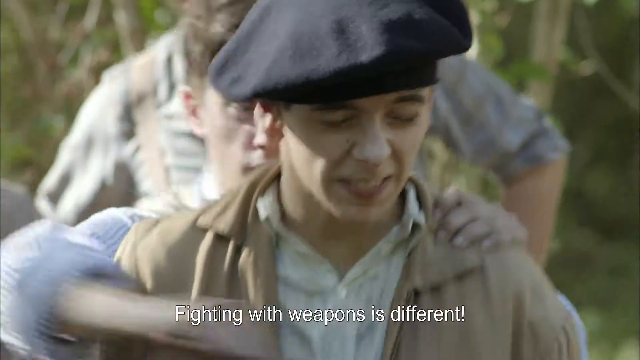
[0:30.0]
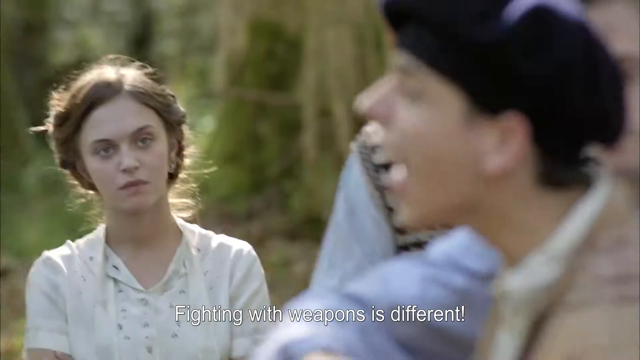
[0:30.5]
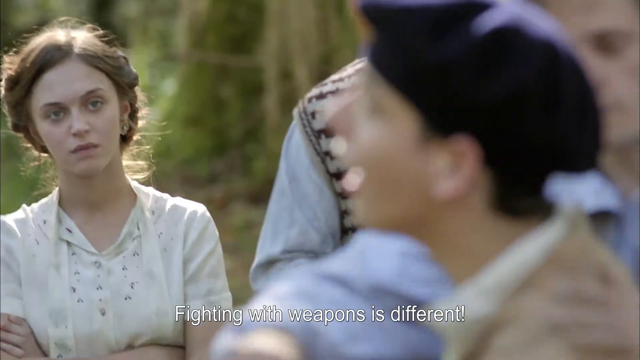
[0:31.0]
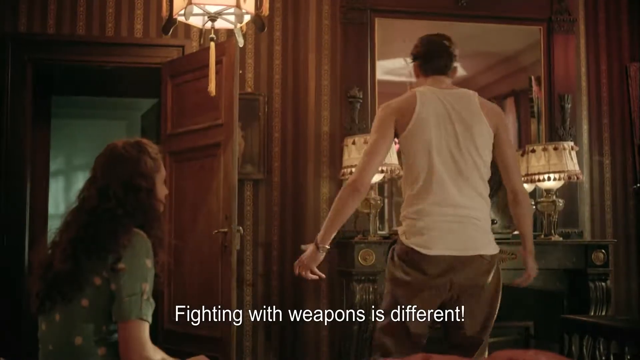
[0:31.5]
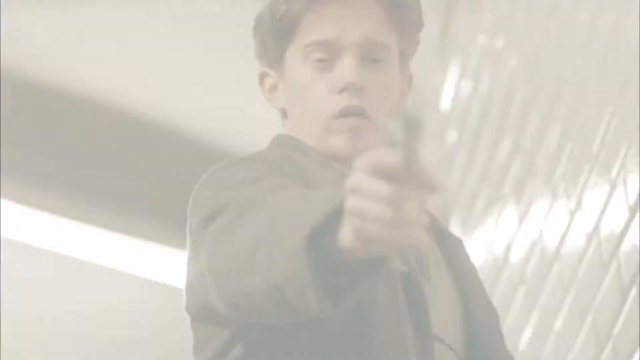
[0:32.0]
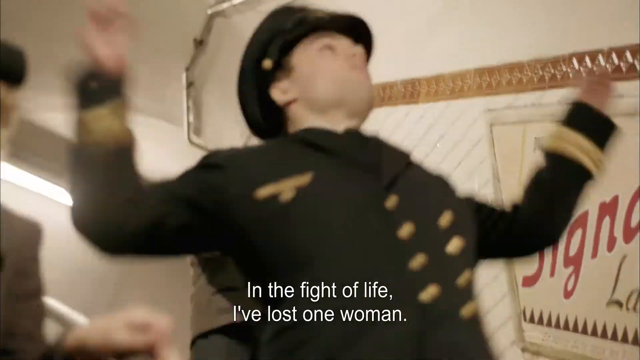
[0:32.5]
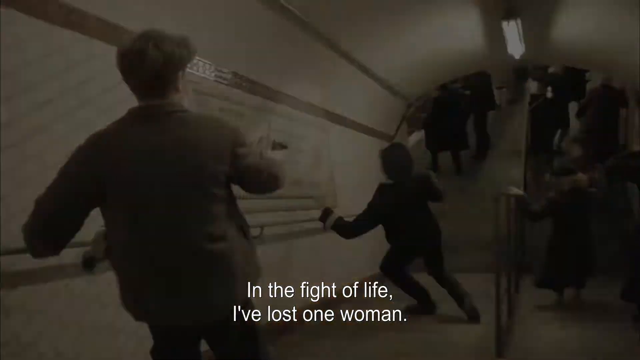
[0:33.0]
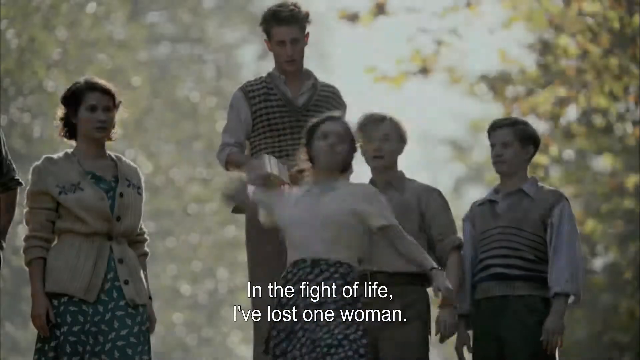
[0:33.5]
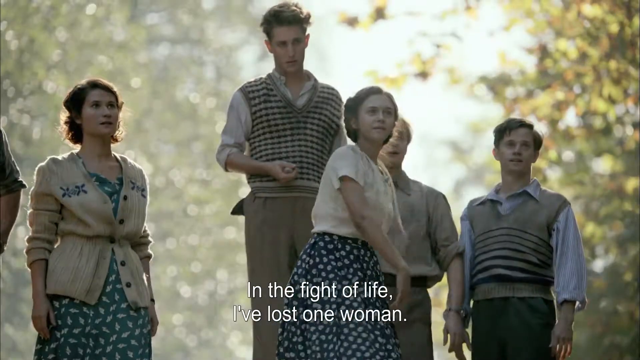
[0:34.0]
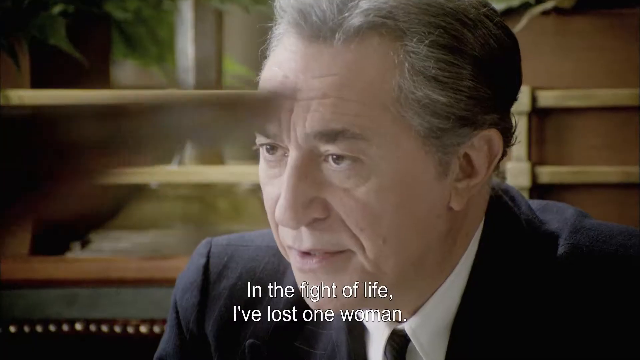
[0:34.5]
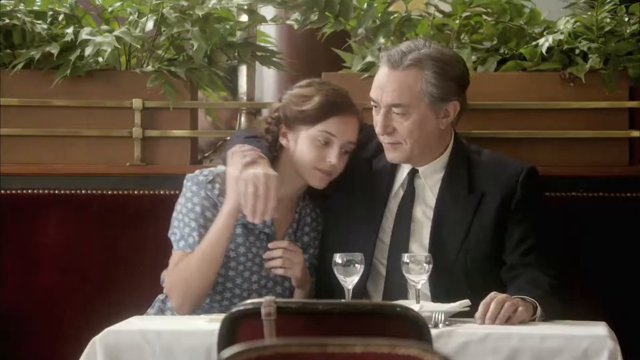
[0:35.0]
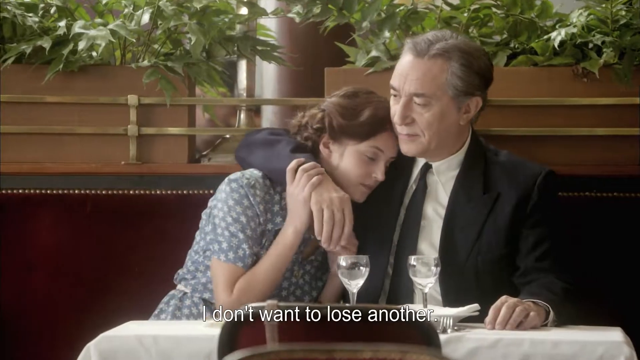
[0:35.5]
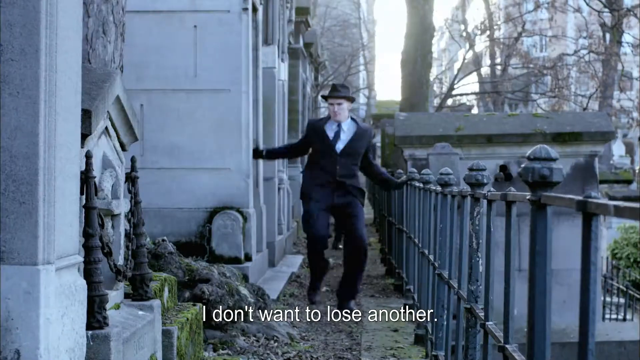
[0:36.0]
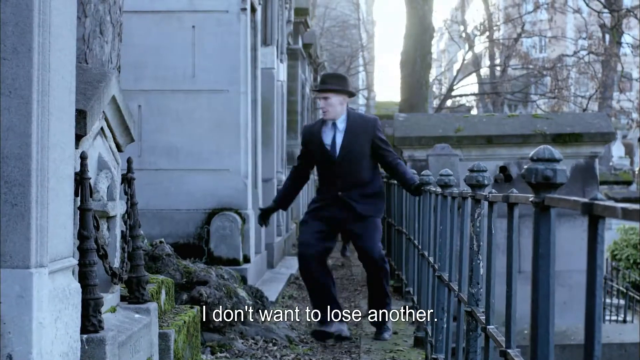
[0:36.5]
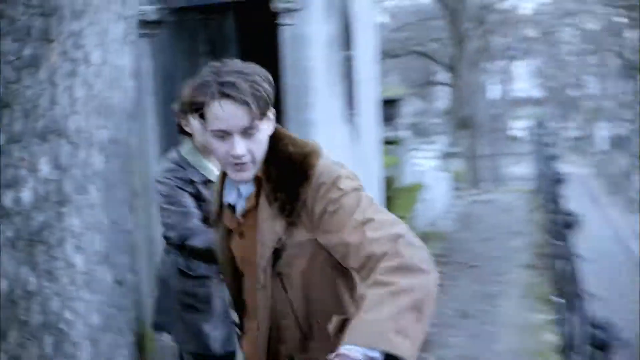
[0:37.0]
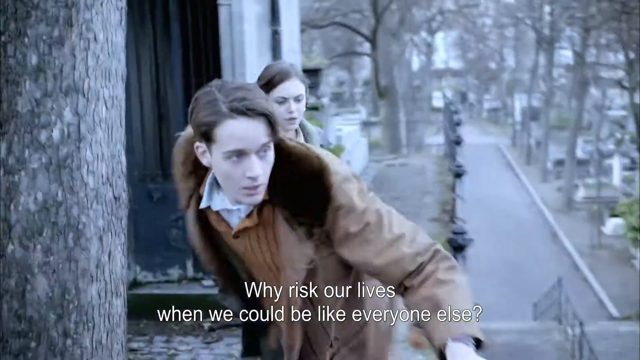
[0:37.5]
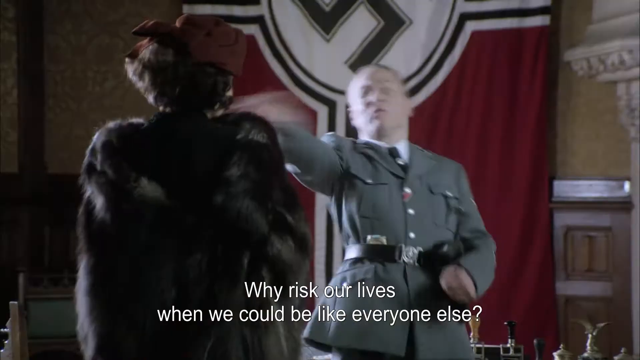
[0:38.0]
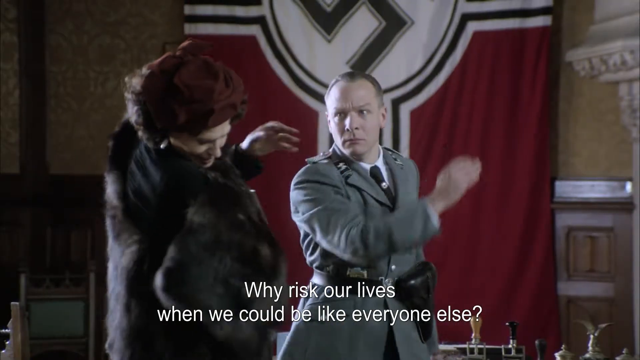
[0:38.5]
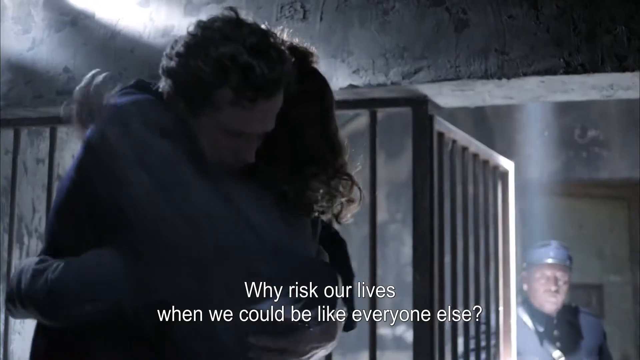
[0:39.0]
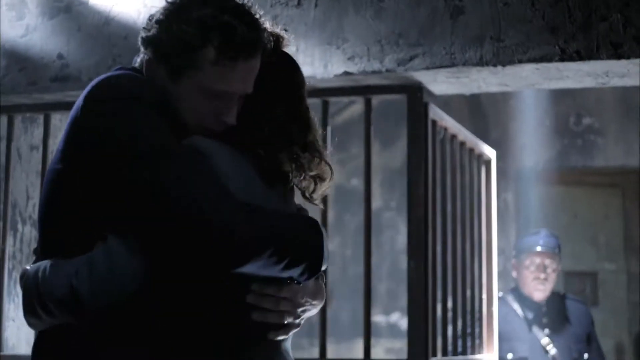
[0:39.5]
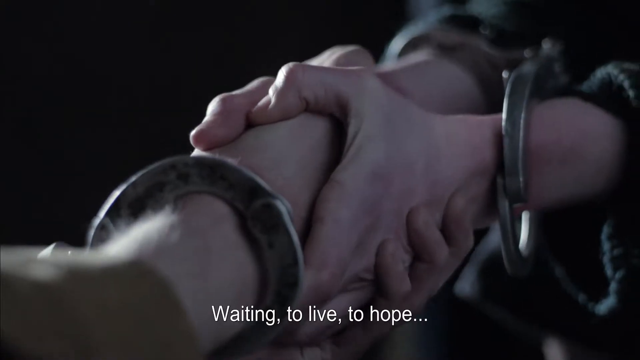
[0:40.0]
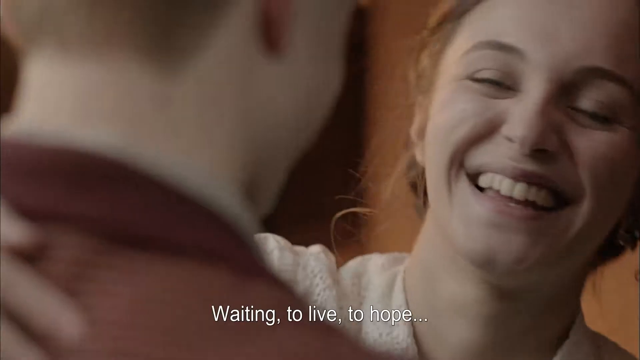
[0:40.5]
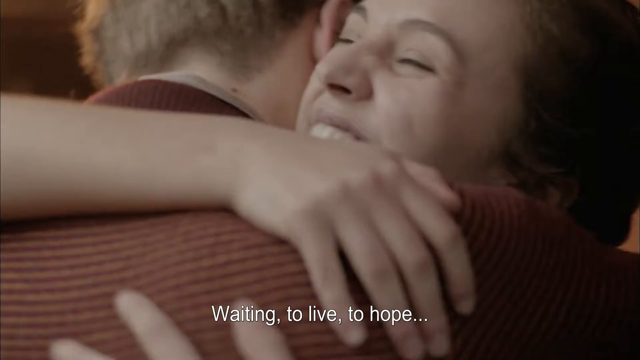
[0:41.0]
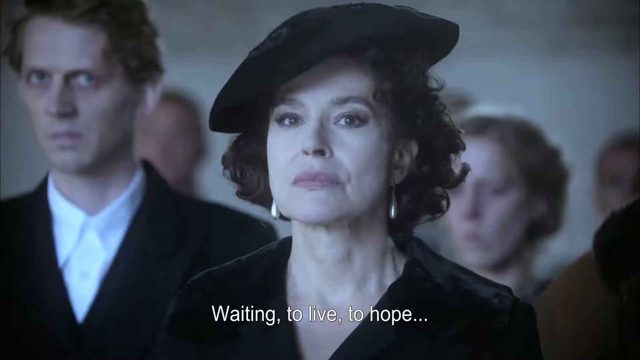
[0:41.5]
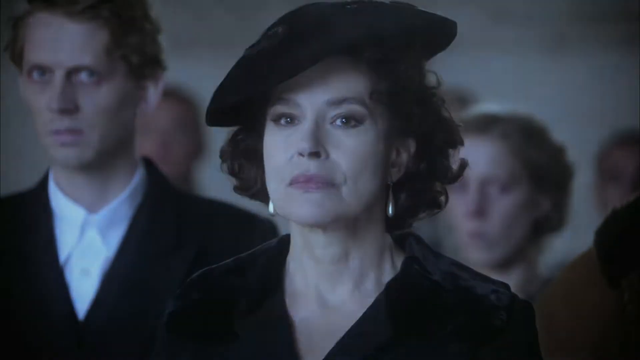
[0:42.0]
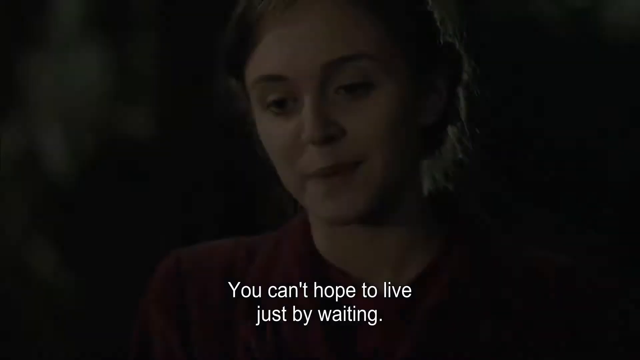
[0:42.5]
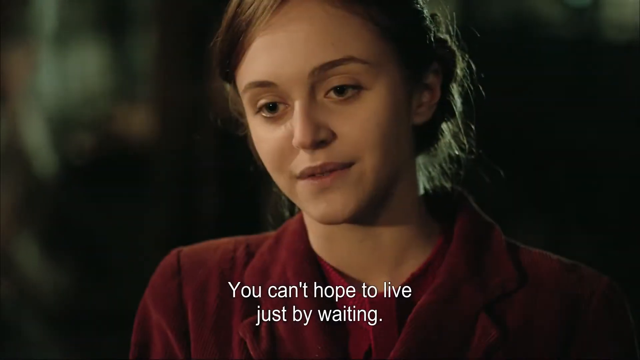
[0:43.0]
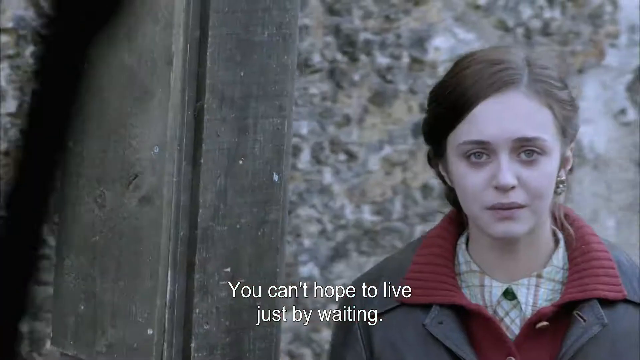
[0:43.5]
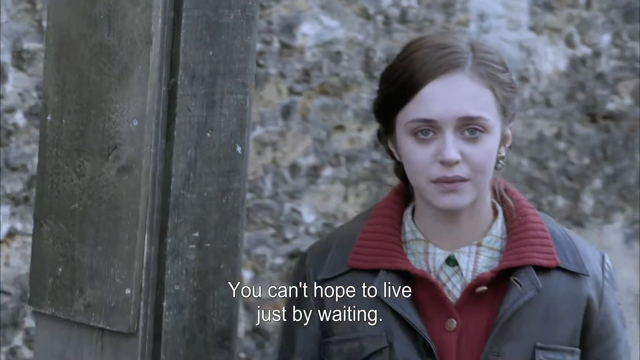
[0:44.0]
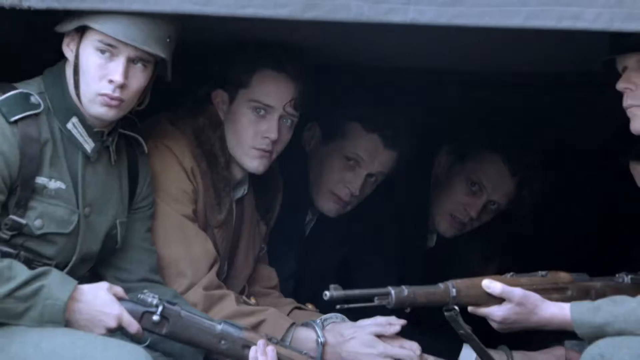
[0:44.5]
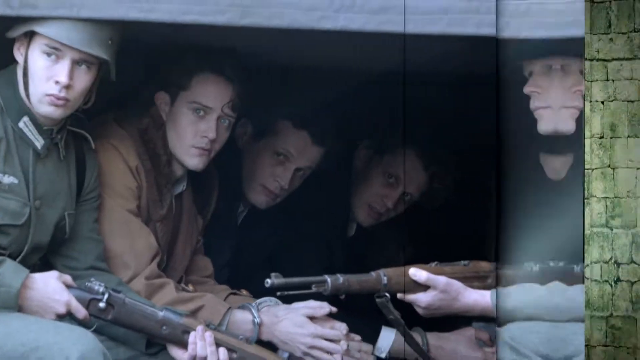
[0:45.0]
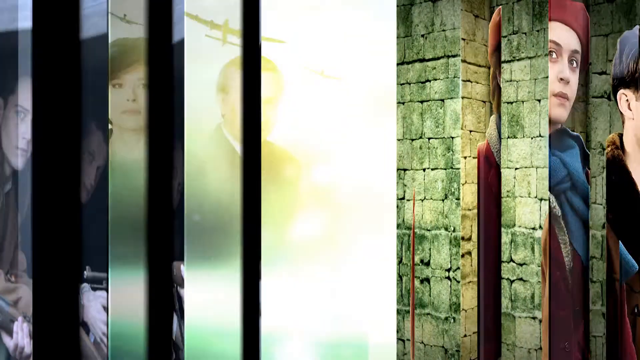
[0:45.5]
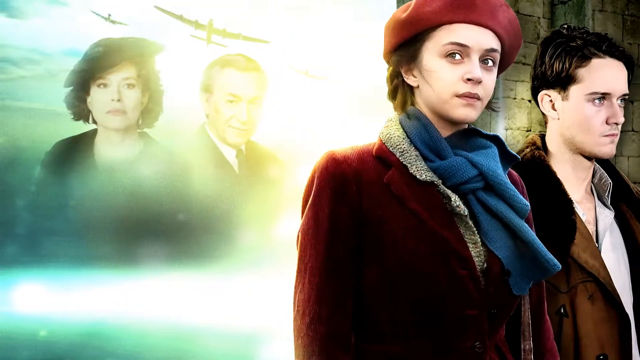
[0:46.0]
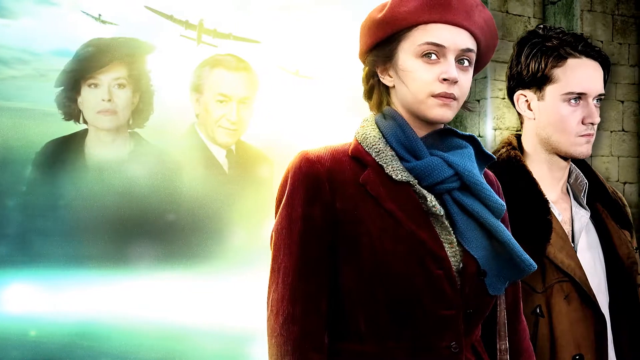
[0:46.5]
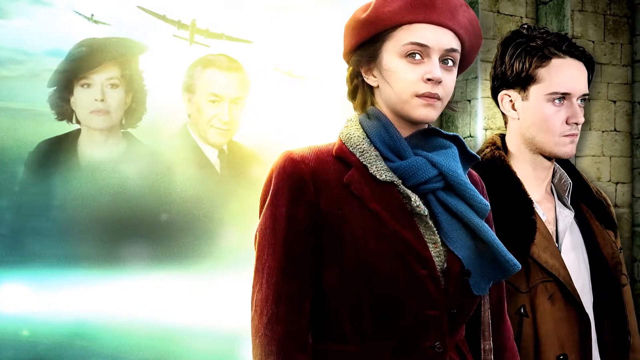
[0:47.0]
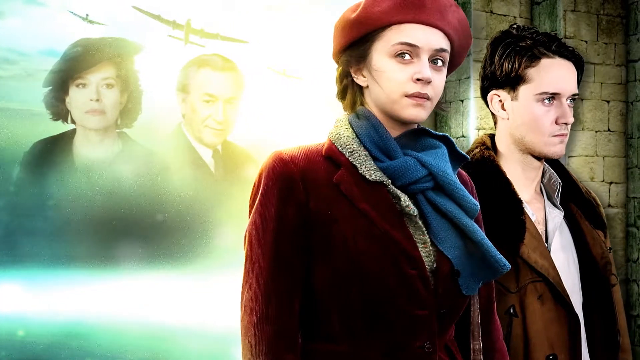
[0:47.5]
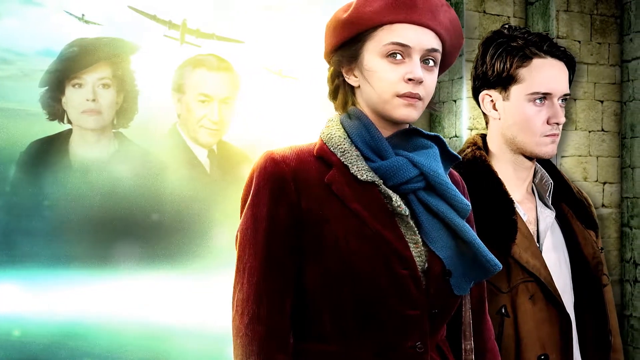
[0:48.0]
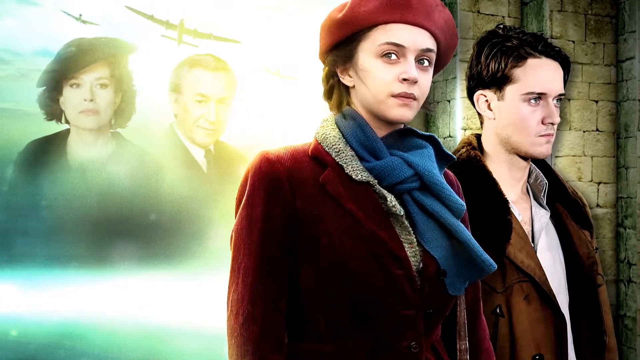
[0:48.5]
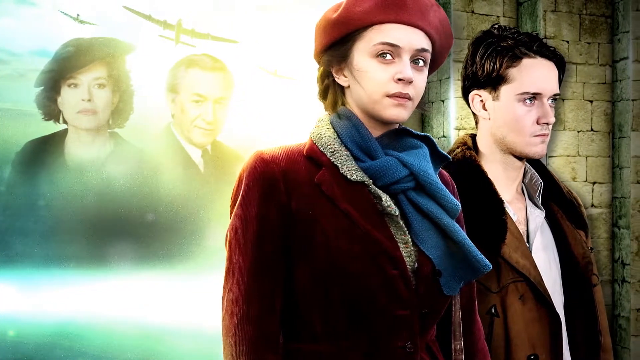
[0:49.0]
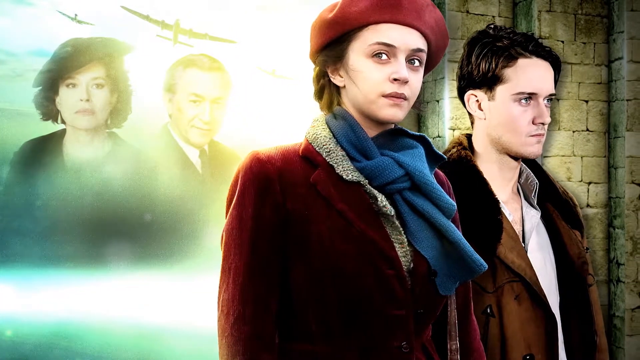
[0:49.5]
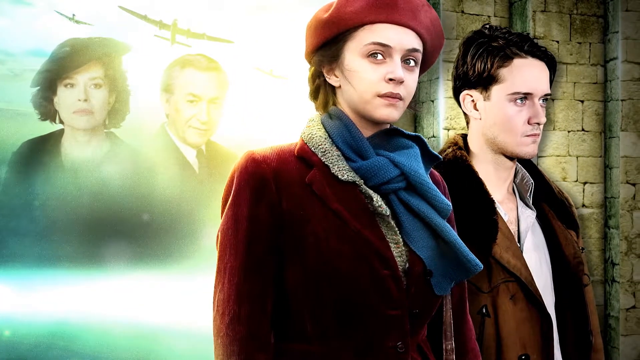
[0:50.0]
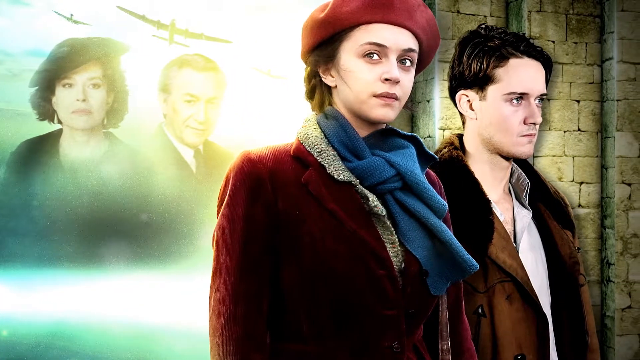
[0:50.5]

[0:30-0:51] A series of many snippets from the film continues. Predominantly featured are a young man and woman in a room with brown wallpaper with vertical stripes. The young man says "Fighting with weapons is different" with his back to the young woman, who is seated on a bed. The featured young man, holding a gun, shoots one of the officers in the back, and the officer falls down a set of stairs. In another scene, five young people are present, one of them a young woman in a polka dot blue dress and a white shirt; she throws a rock as the others watch. A brief scene shows a distinguished-looking older man in a suit who appears to be at a restaurant. He sits at a table with his arm around the young woman featured throughout the video; her right hand grabs his arm as she lays her head on his shoulder. The older man says "I don't want to lose another". Next, two men in suits appear to be chasing the young man and young woman along a narrow pathway between two buildings. In a serious scene, a soldier slaps a woman across her left cheek with his right hand; she wears a fur coat, and behind them a large Nazi flag hangs from the wall. Two of the characters hold hands, both in handcuffs. Another couple smiles and hugs. The young woman watches as a truck drives off with two soldiers sitting in the back closest to the exit; sitting beyond the soldiers are three young men, one of whom is the young man featured in most of the scenes.